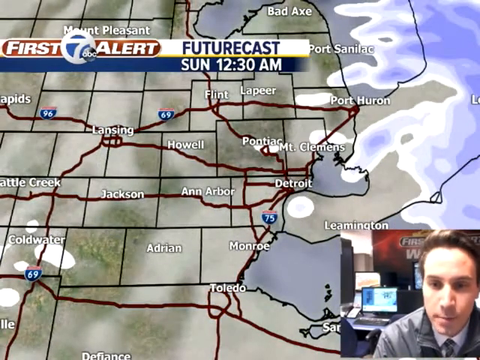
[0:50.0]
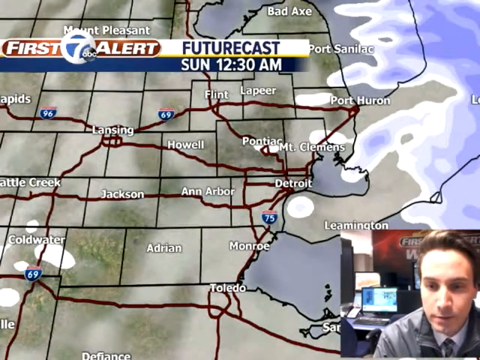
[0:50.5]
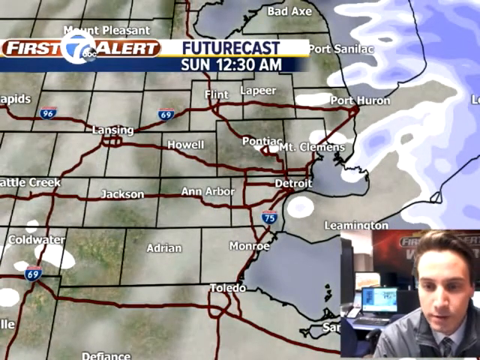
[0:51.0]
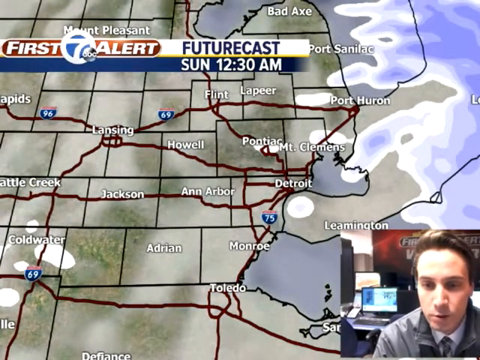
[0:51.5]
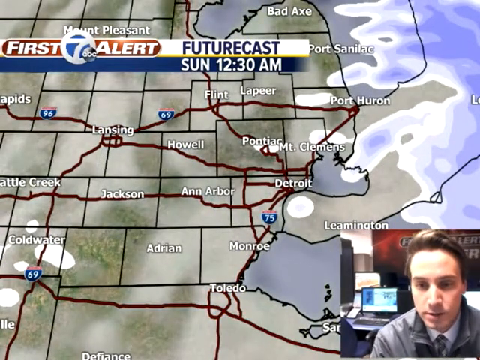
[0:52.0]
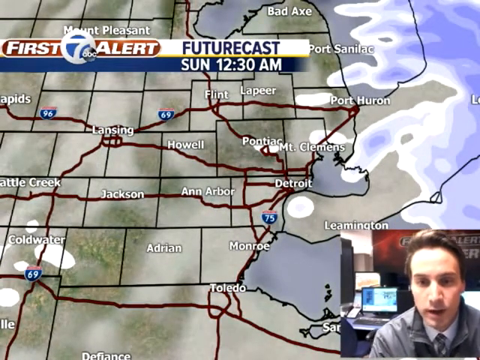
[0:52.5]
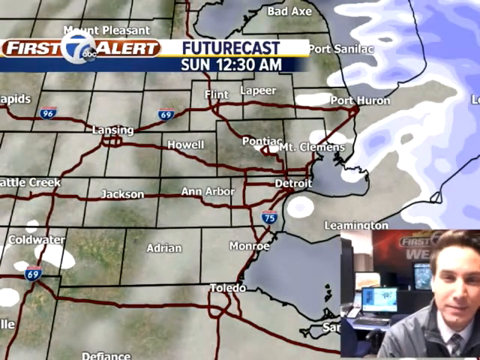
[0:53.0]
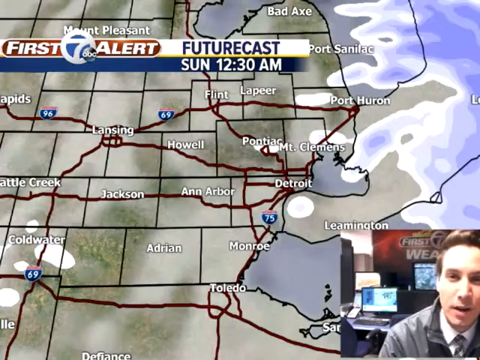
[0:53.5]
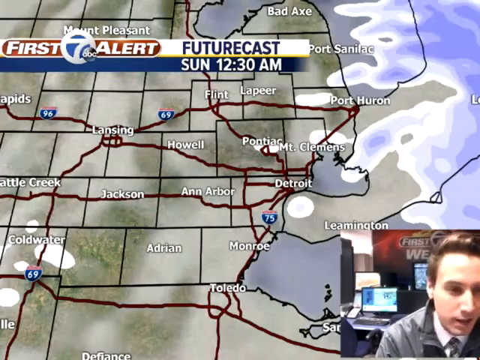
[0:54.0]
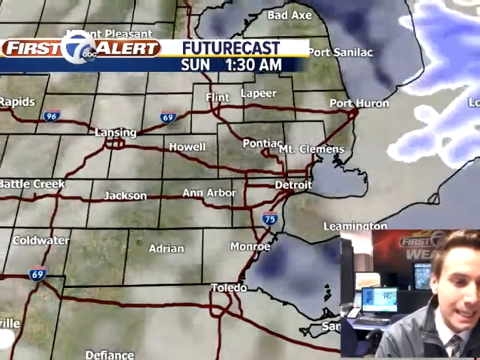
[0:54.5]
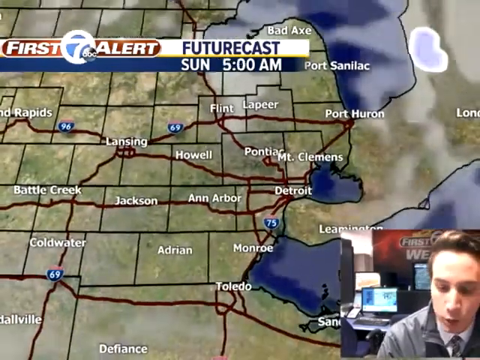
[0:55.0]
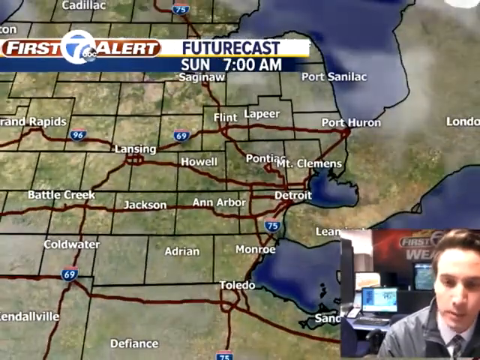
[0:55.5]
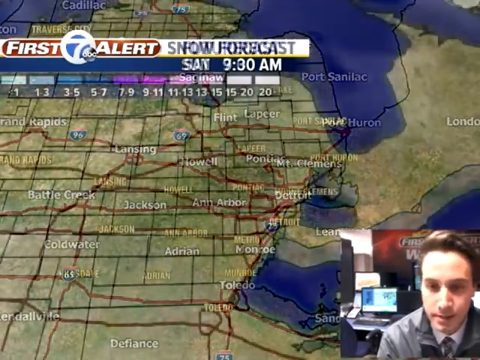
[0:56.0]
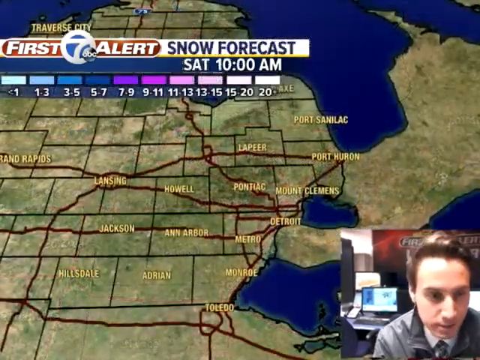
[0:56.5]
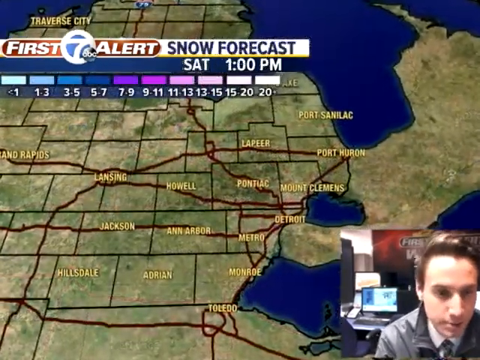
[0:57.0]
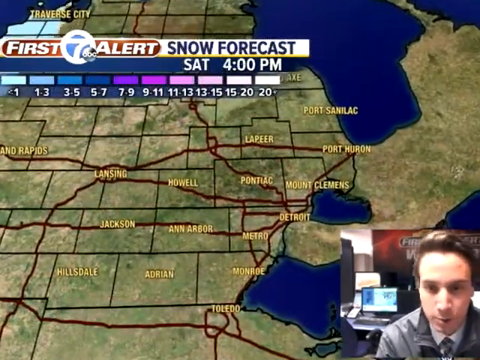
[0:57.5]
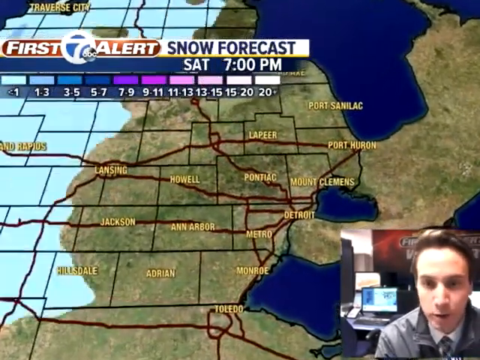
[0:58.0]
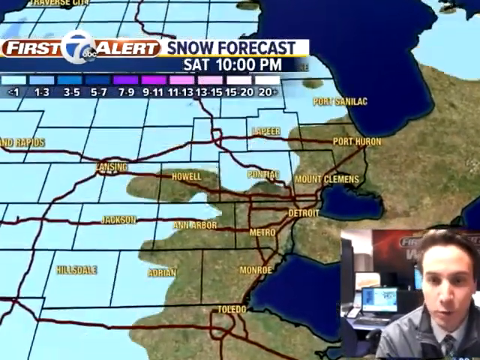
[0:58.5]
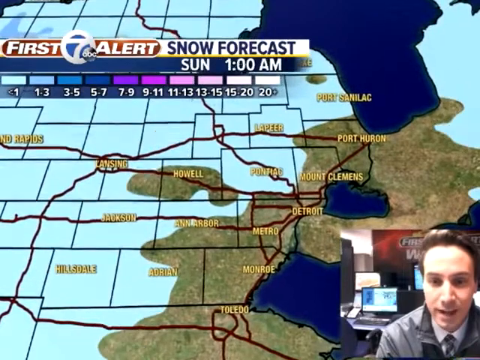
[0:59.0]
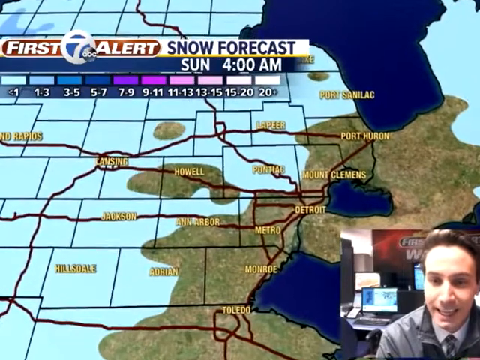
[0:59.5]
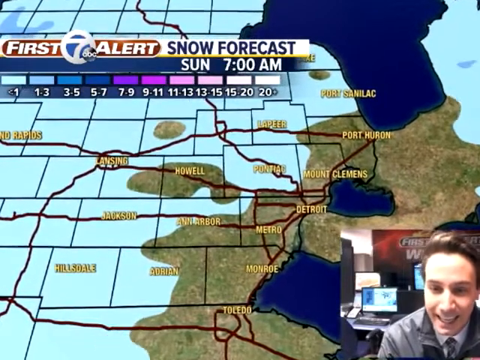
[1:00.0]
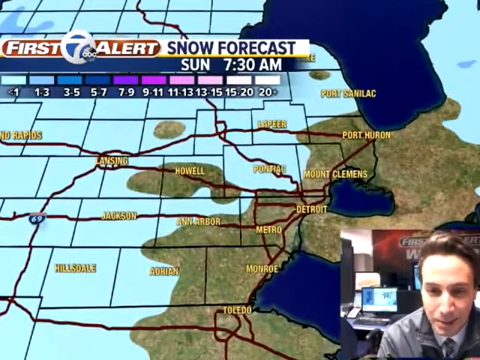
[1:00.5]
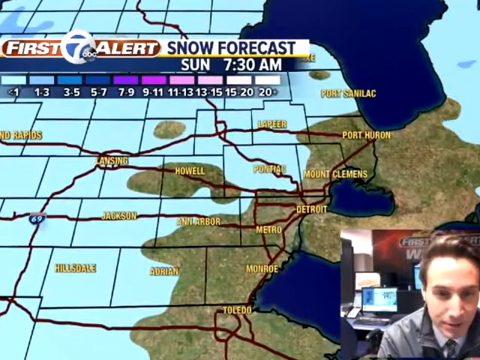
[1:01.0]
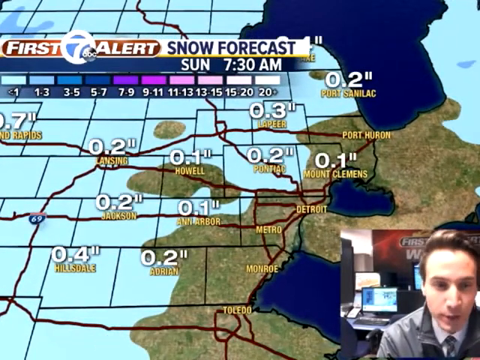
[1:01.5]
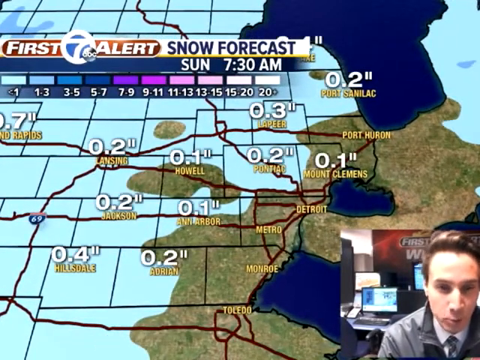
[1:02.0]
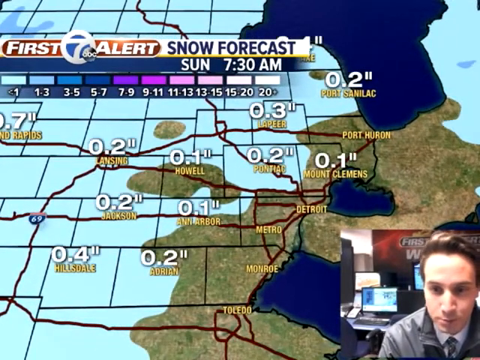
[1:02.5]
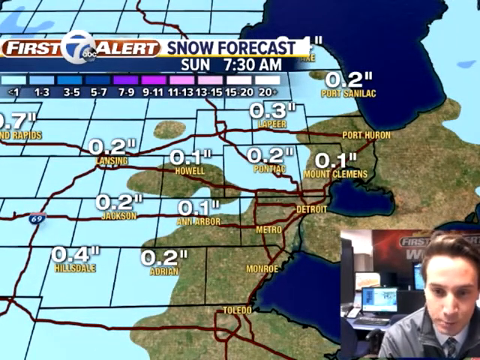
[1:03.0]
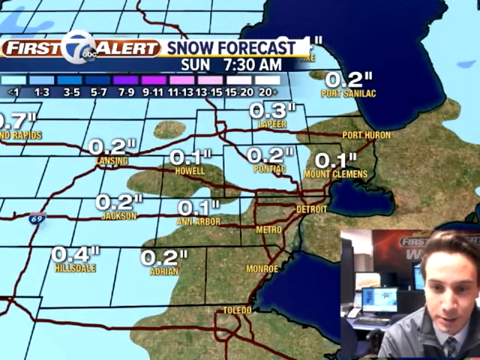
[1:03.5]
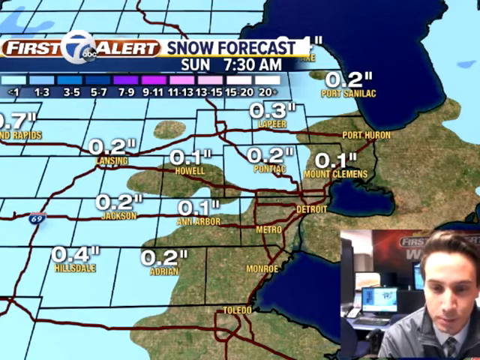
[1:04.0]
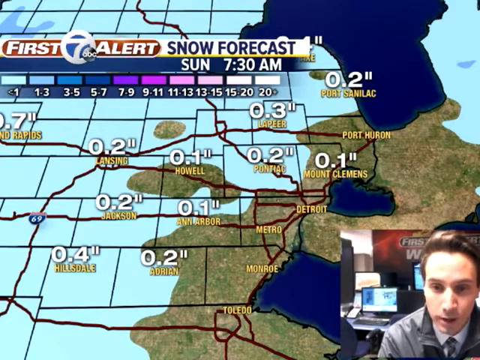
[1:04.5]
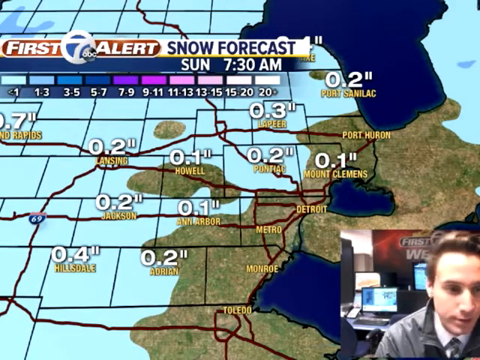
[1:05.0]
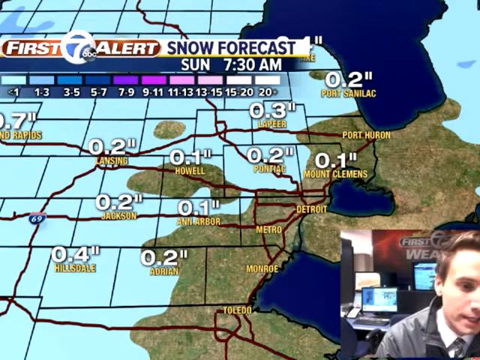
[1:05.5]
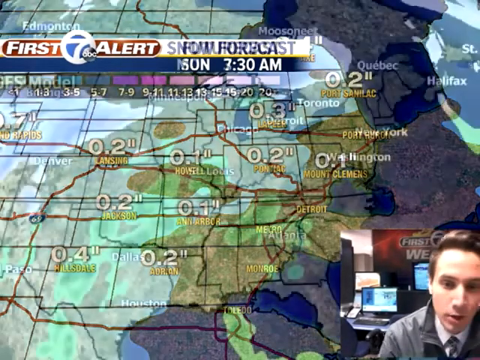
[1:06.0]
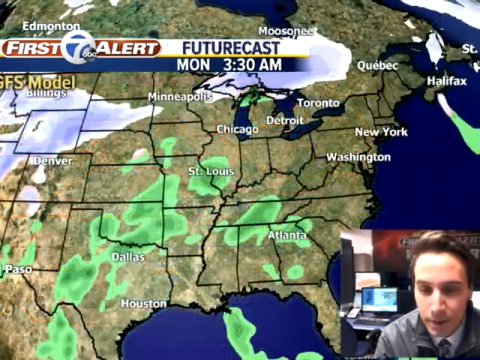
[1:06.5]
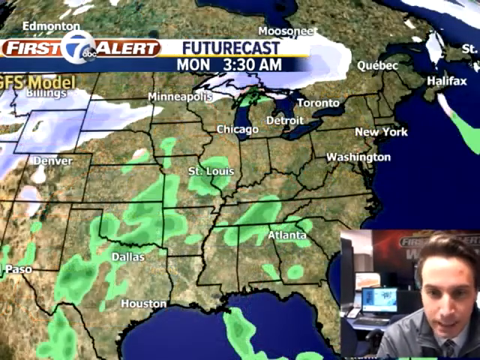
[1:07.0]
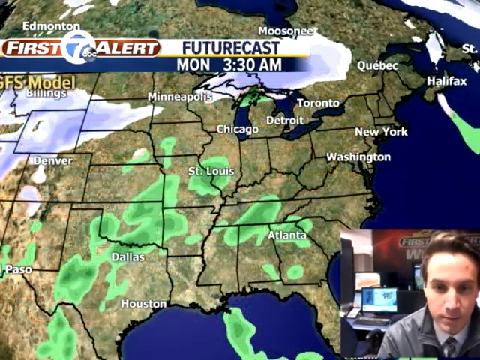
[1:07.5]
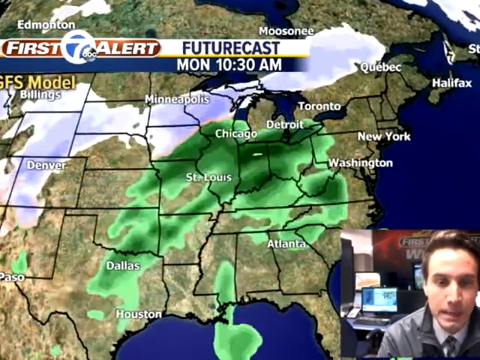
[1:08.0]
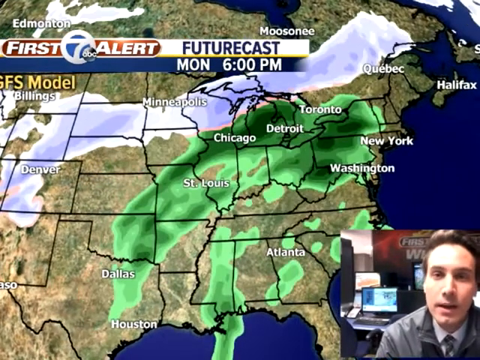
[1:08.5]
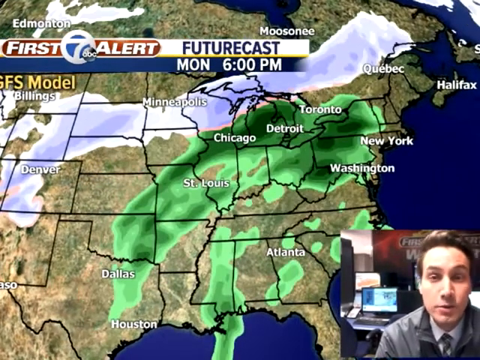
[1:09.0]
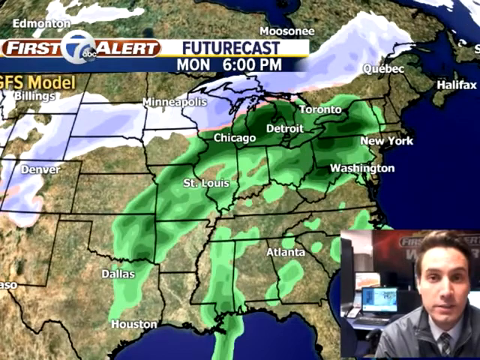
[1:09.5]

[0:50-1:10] The hourly forecast shows 6 a.m. 14 and 22, 8 a.m. 16 and 25, 10 a.m. 21 and 30 degrees, then 26 and 34, 2 p.m. 28 and 36 degrees and 4 p.m. 30 to 37 degrees, going down to 28 and 35 and 26 to 33 degrees. A future cast for Sunday lists cities including Chicago, Detroit, Cleveland, New York, St. Louis and North Bay. Chicago, Detroit, Toronto and Washington are then shown on the screen, along with days from Saturday through Wednesday and temperatures including 37, 42, 54, 58, 40, 39 and 45.